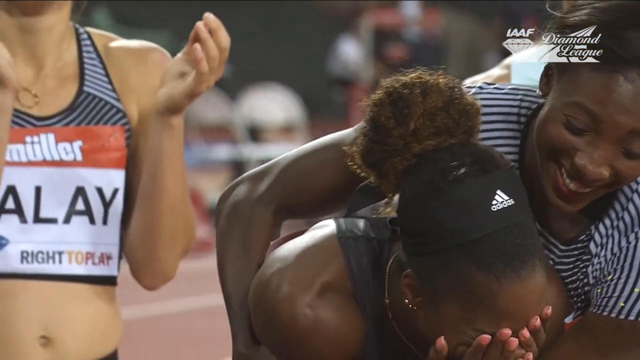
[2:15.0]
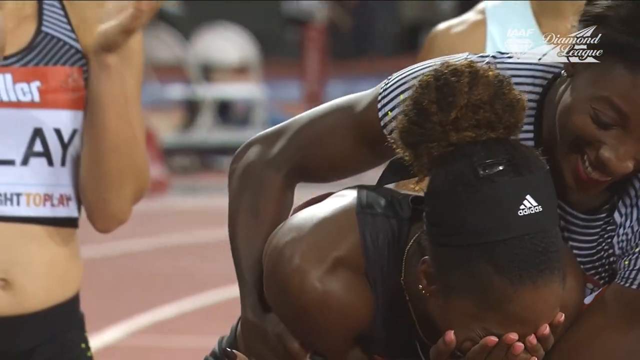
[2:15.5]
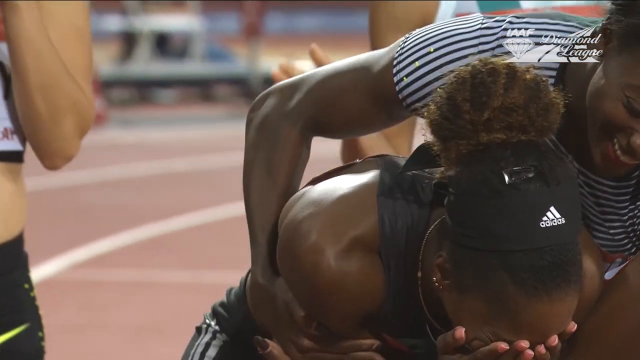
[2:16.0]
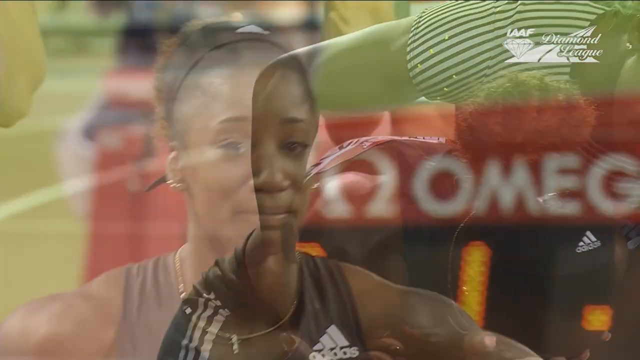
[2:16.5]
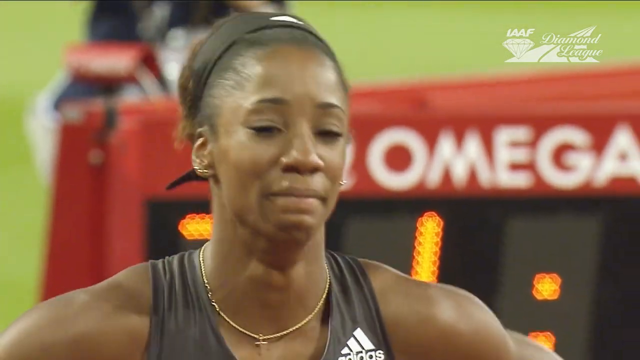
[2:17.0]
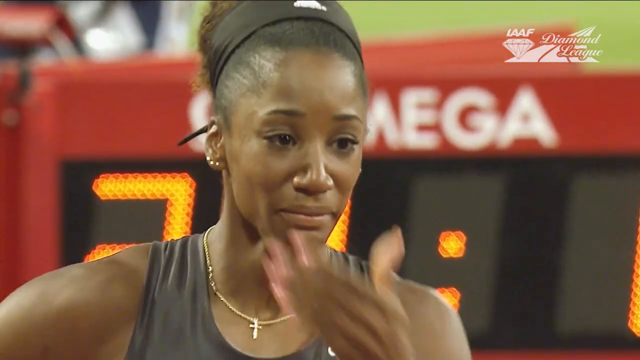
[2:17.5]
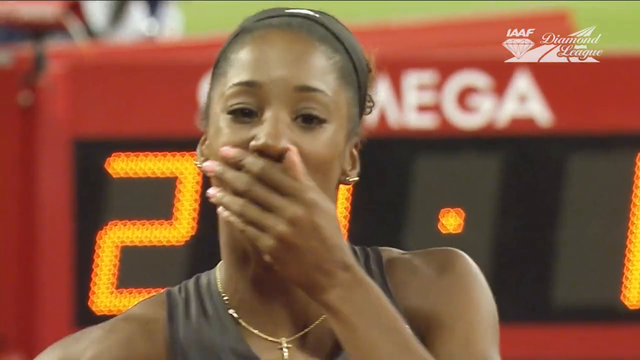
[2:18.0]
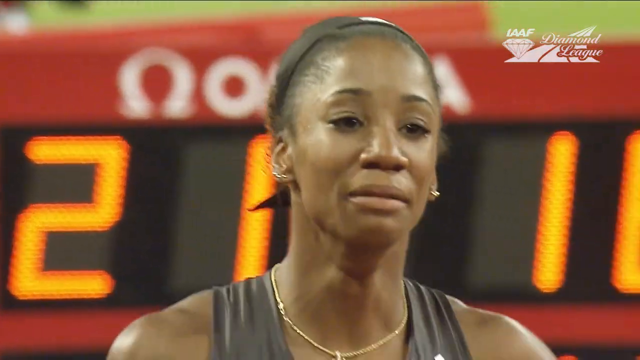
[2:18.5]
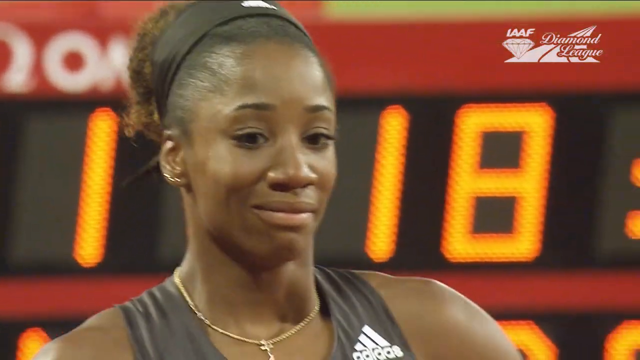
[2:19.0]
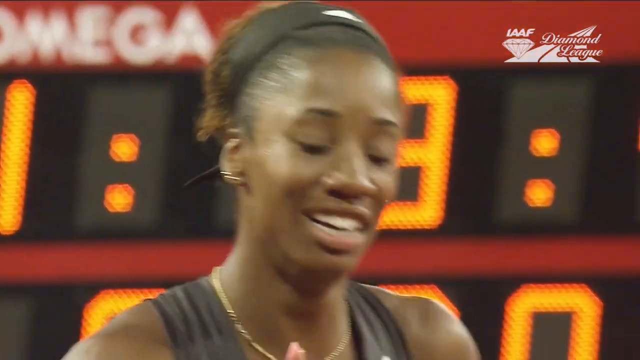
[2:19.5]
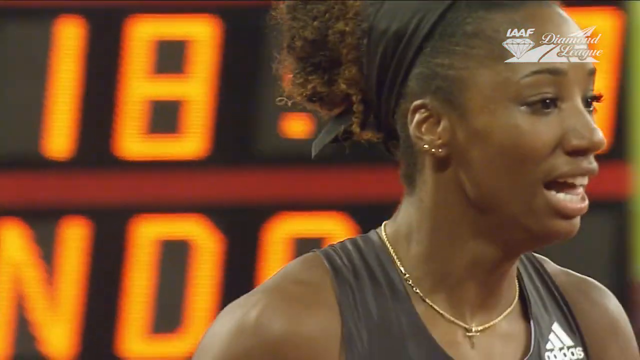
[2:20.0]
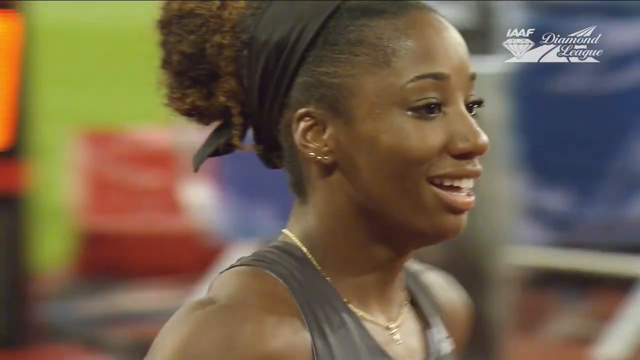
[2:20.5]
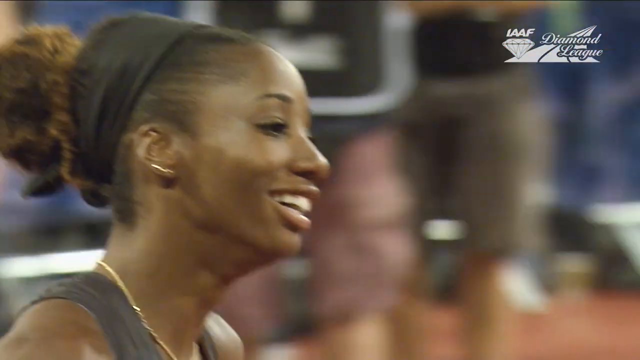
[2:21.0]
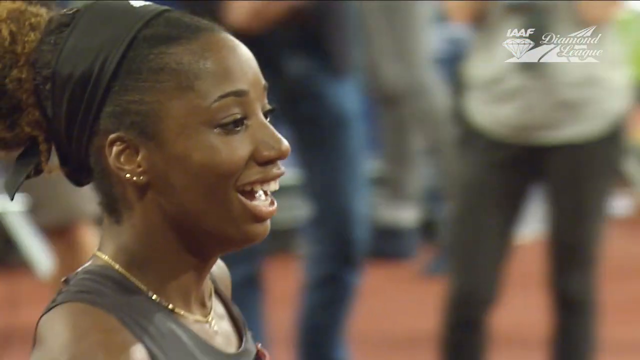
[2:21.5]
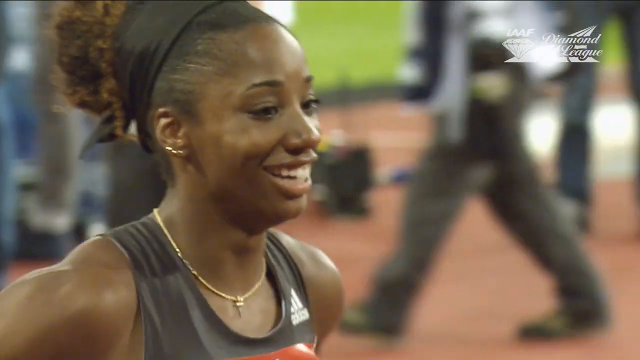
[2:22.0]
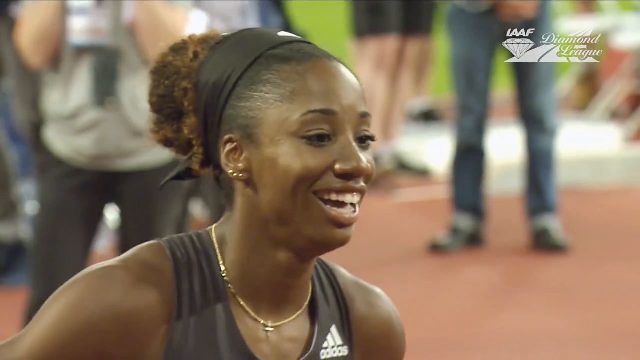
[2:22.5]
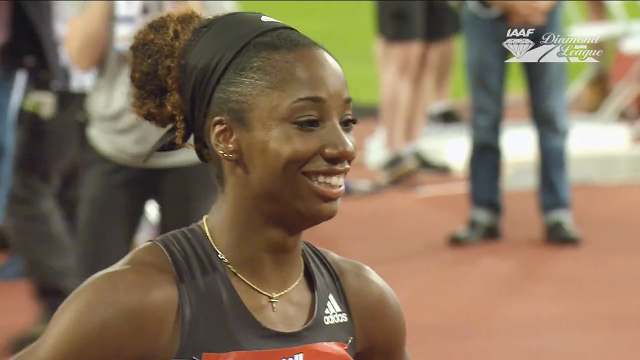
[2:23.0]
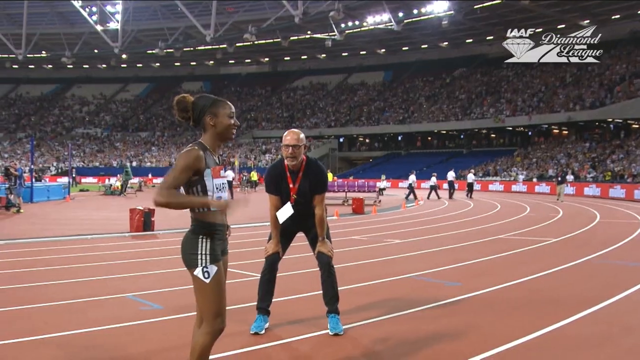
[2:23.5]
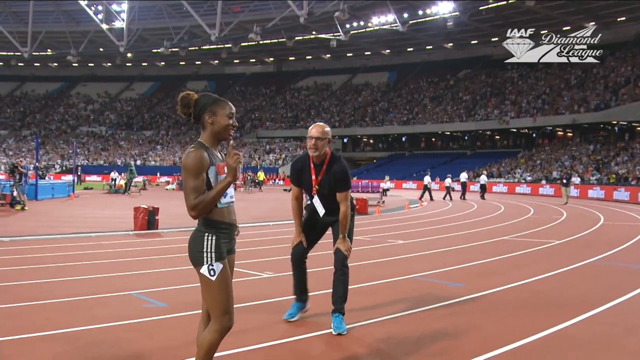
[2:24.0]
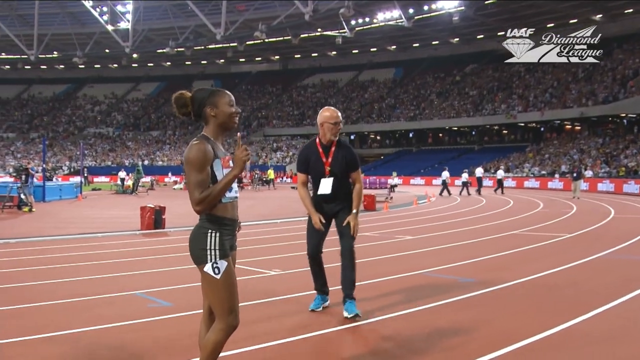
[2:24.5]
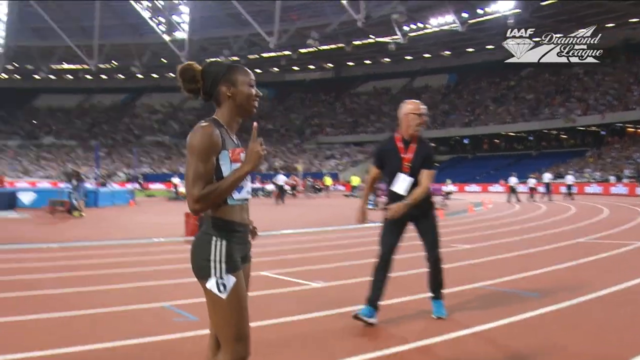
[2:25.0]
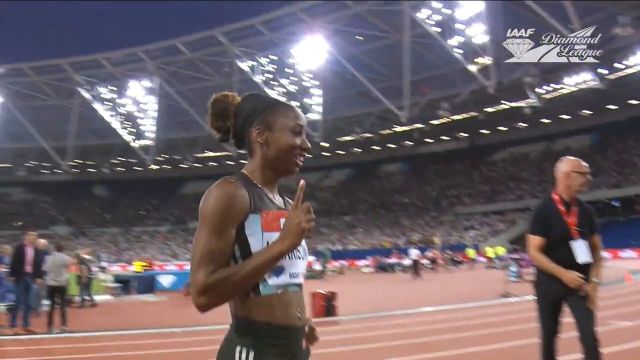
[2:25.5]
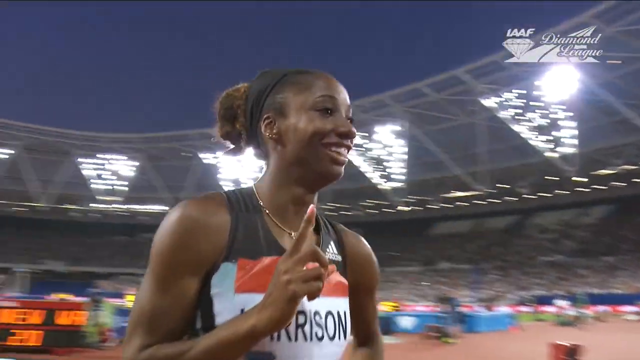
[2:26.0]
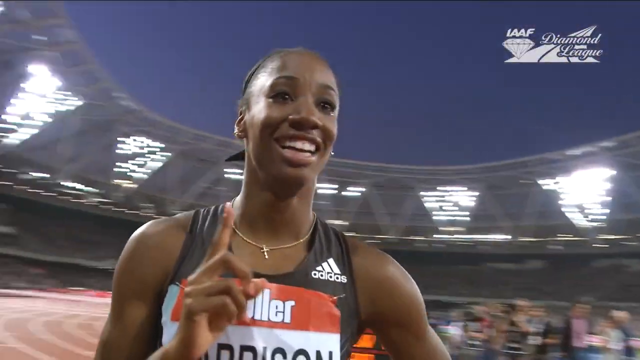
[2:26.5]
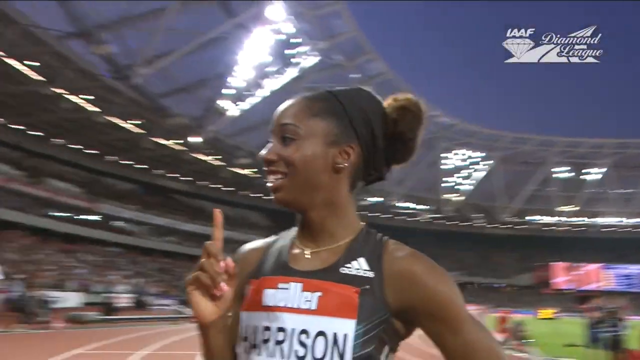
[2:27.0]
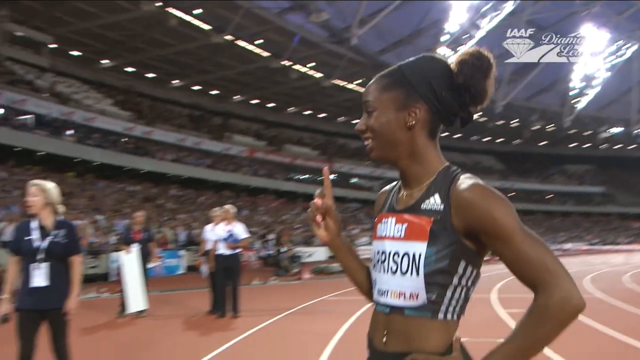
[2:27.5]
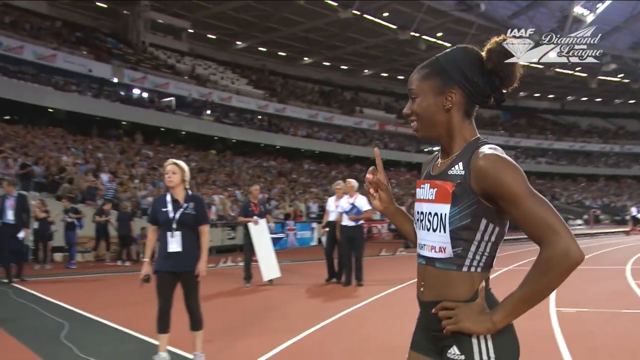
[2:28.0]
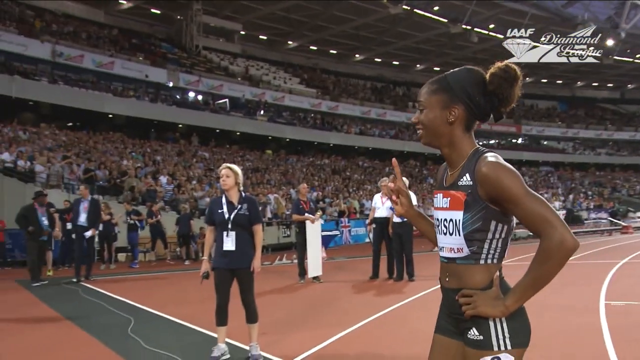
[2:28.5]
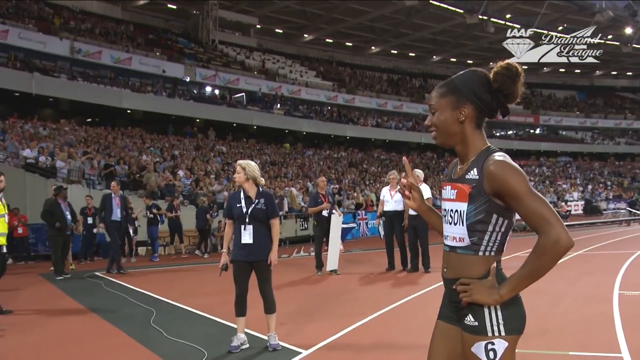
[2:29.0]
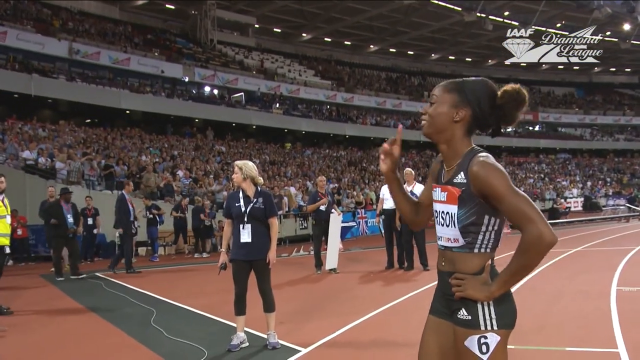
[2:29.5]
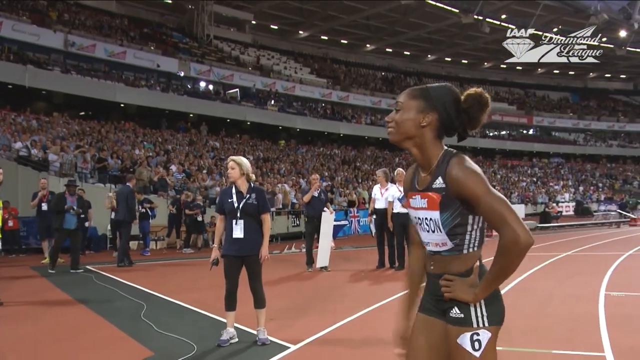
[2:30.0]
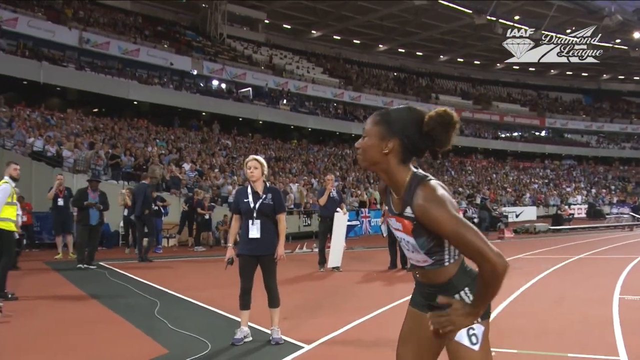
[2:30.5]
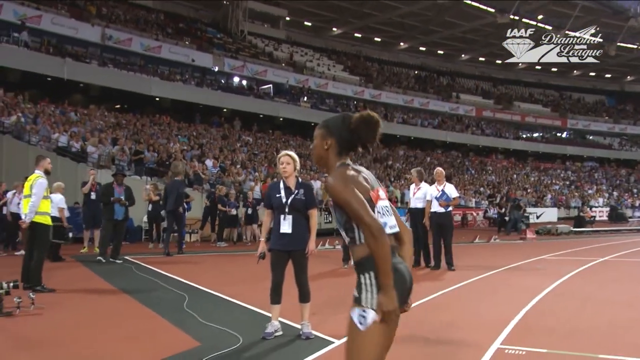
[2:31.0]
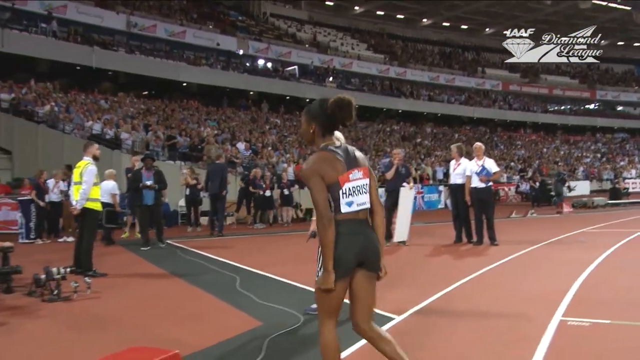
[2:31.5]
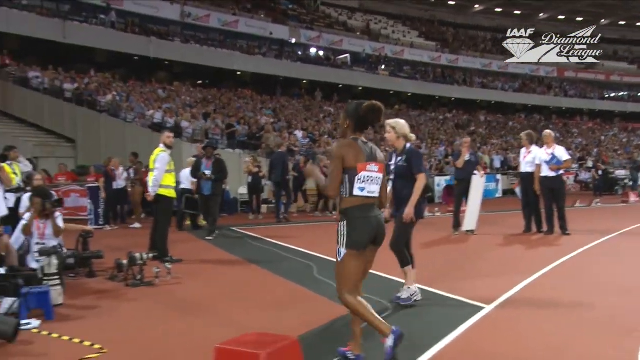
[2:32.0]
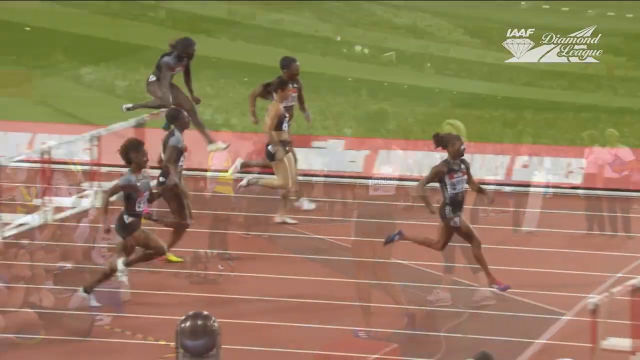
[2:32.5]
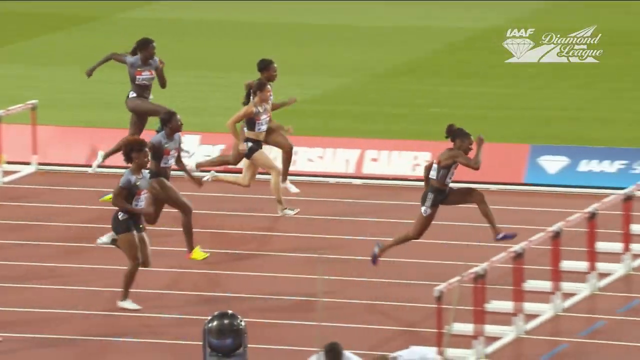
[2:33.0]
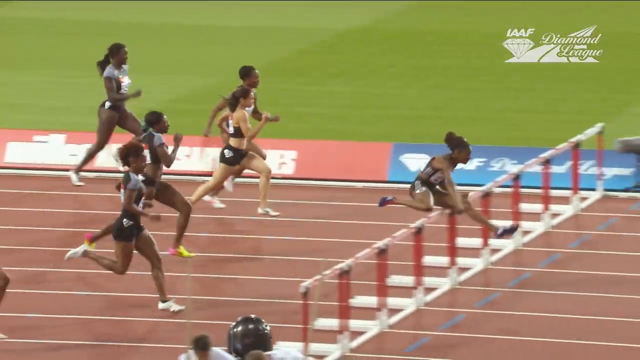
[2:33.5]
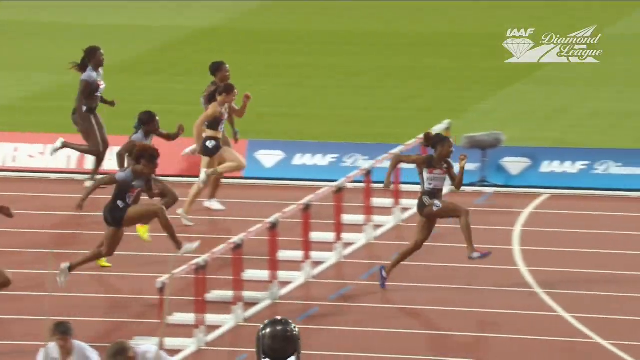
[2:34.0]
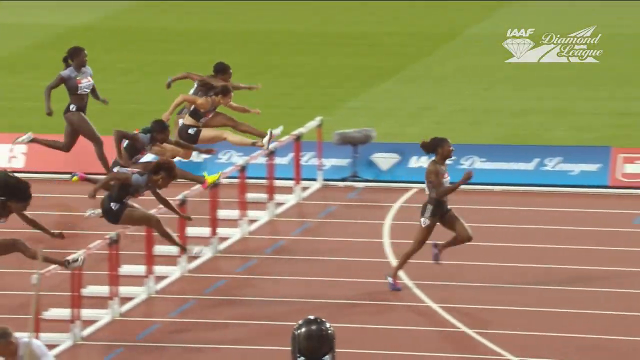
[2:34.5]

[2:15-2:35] Harrison, the winning runner, is shown during her post-race interview. She waves to people who may be her family or supporters, looks emotional and excited about her win, and holds up one finger for number one. The graphic on top still reads "IAAF Diamond League". A person who is presumably the steward of the event congratulates her on her victory.